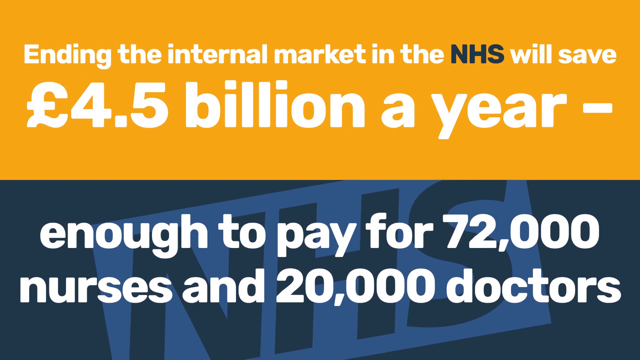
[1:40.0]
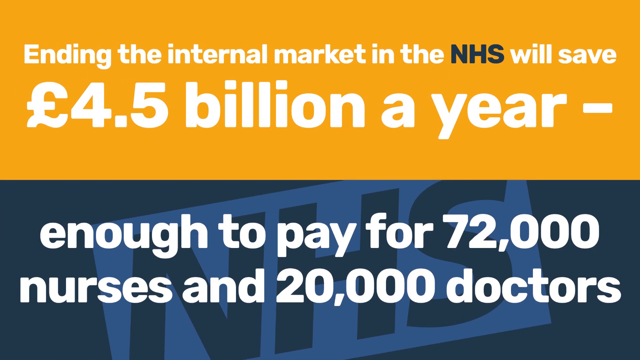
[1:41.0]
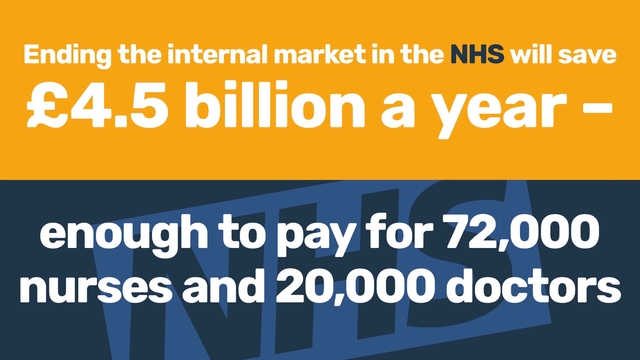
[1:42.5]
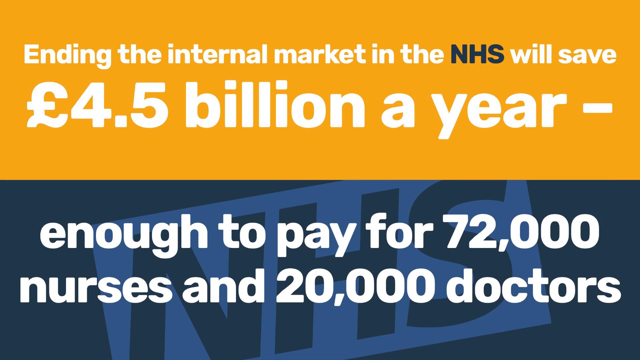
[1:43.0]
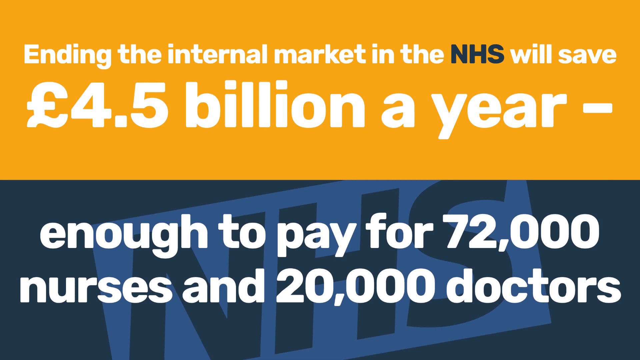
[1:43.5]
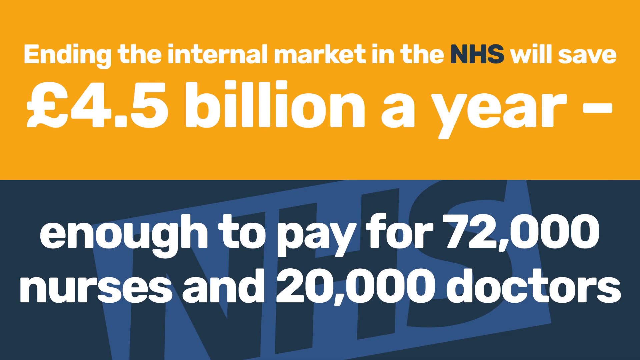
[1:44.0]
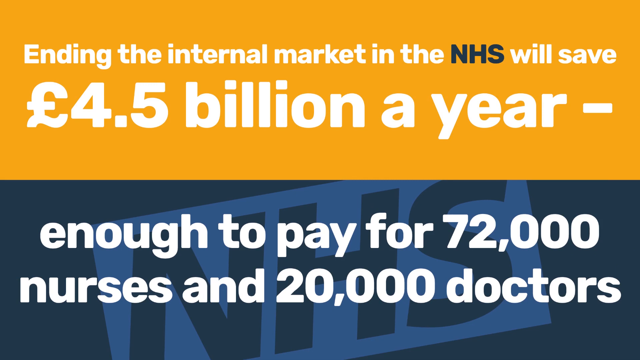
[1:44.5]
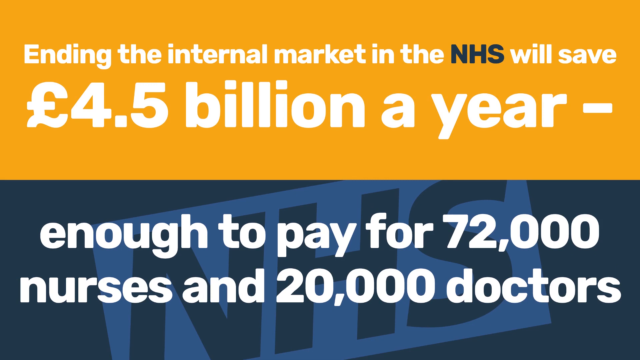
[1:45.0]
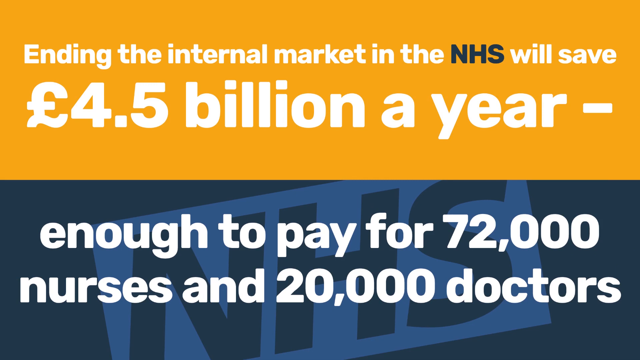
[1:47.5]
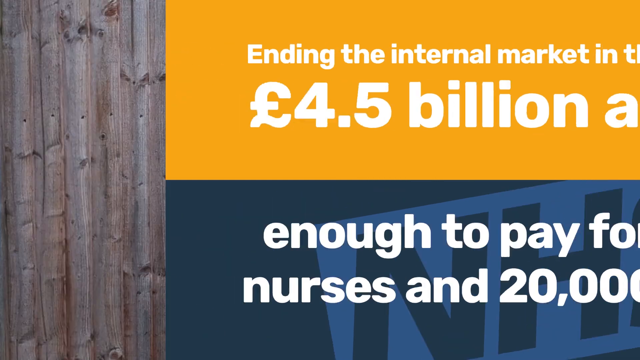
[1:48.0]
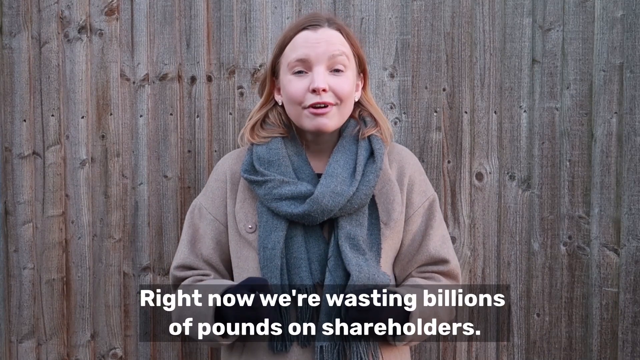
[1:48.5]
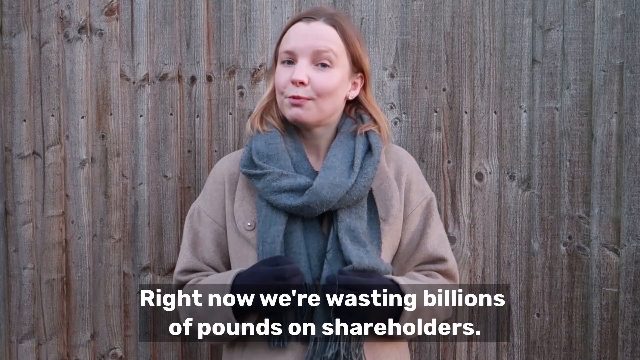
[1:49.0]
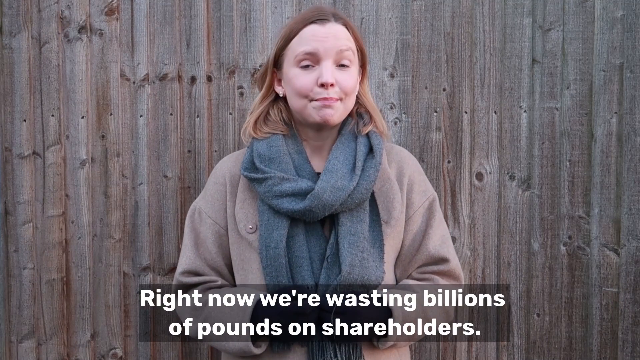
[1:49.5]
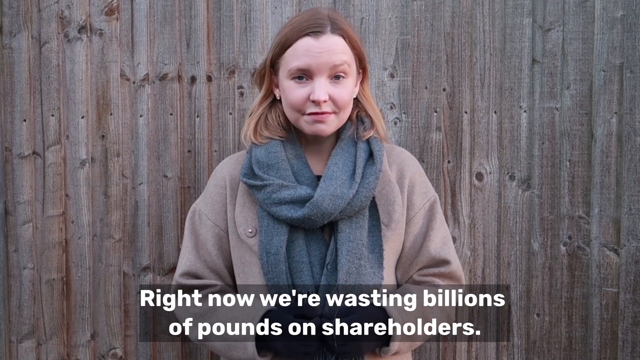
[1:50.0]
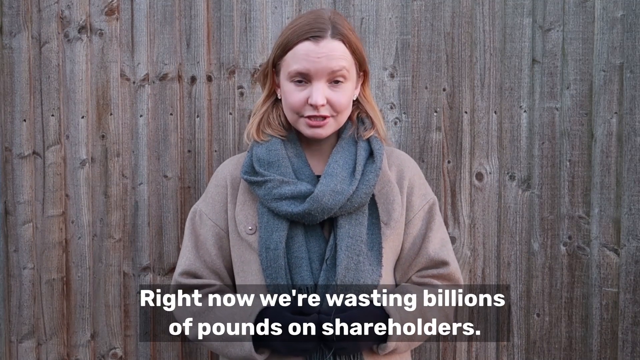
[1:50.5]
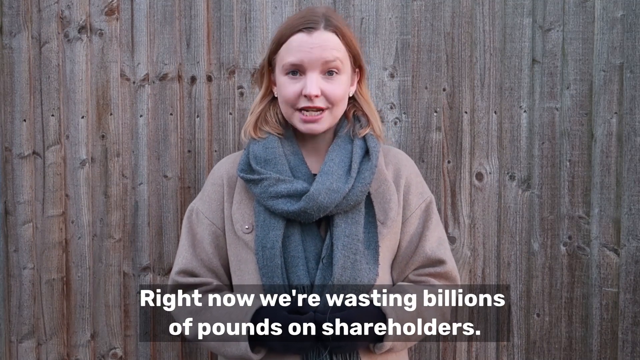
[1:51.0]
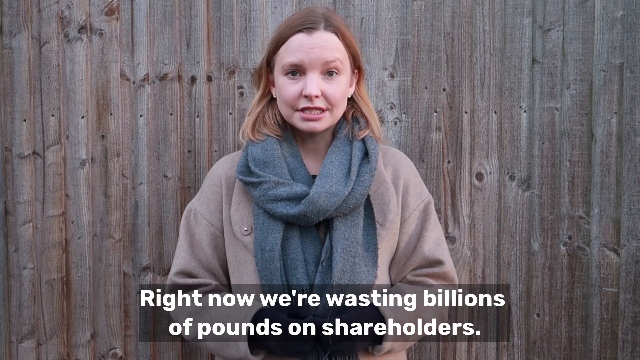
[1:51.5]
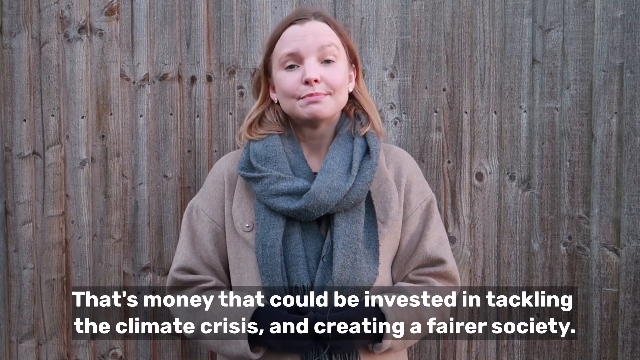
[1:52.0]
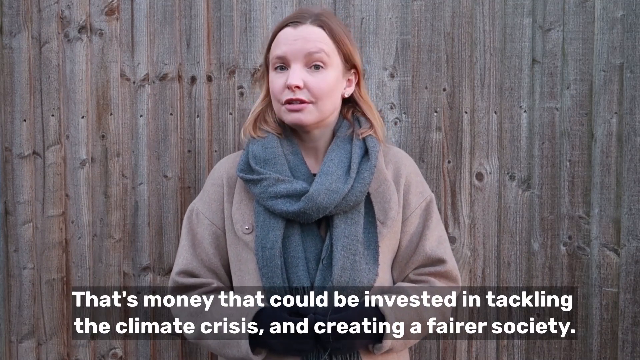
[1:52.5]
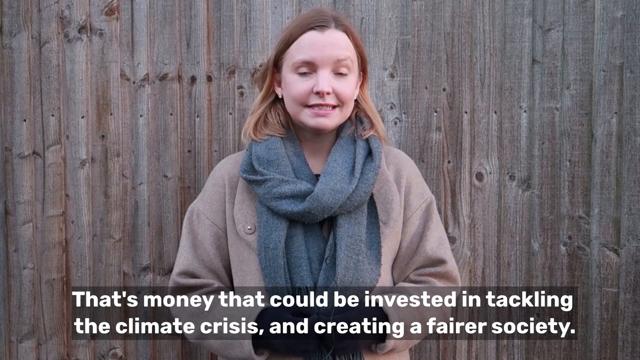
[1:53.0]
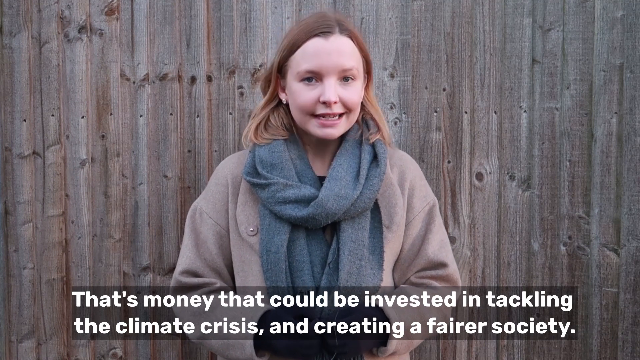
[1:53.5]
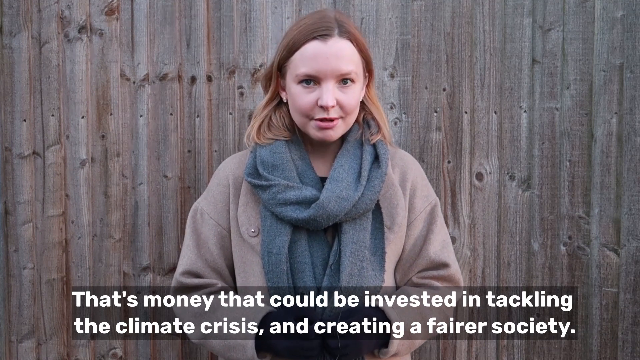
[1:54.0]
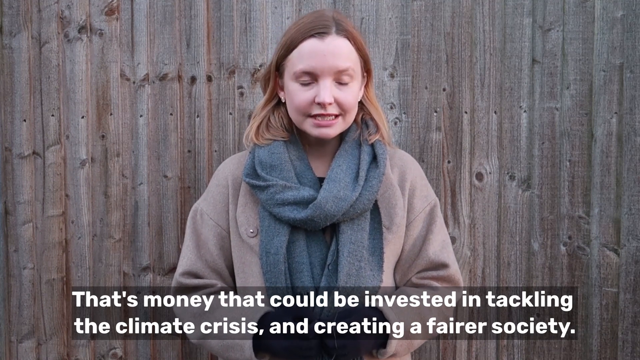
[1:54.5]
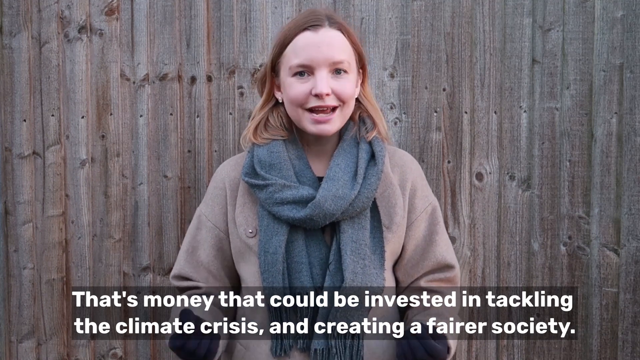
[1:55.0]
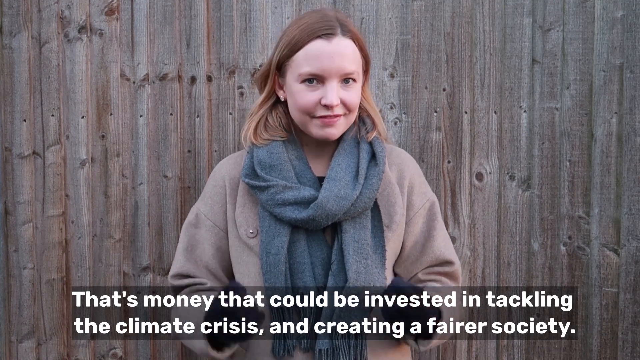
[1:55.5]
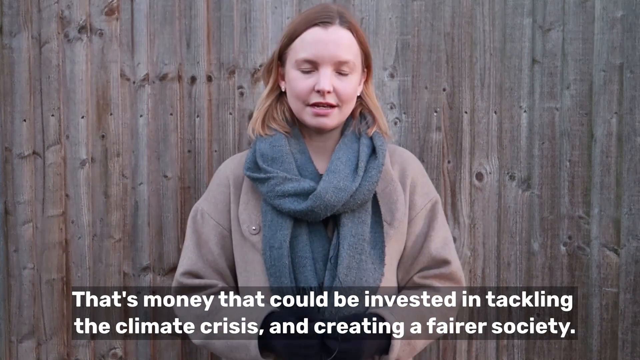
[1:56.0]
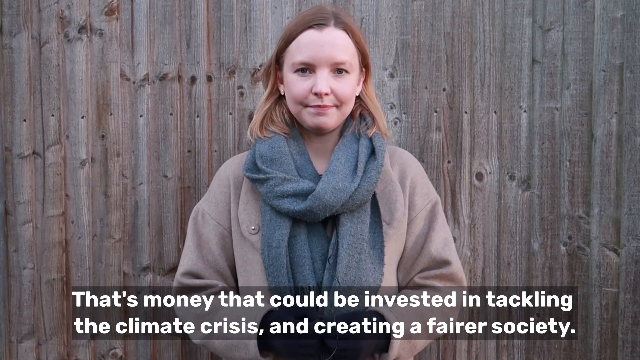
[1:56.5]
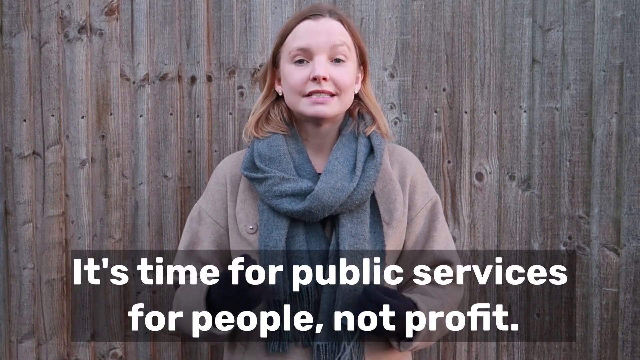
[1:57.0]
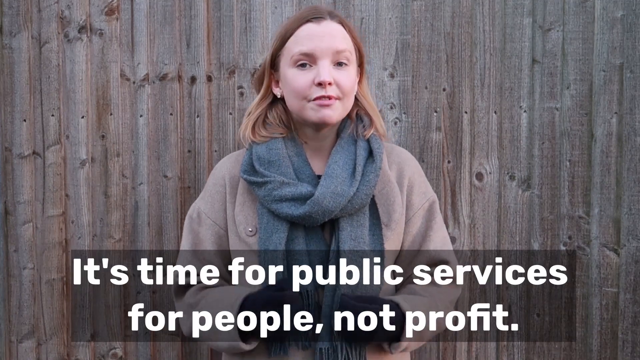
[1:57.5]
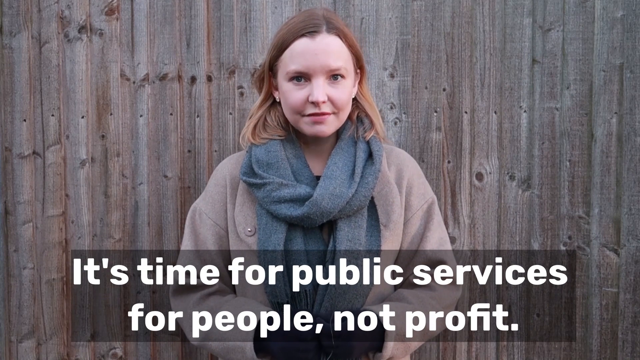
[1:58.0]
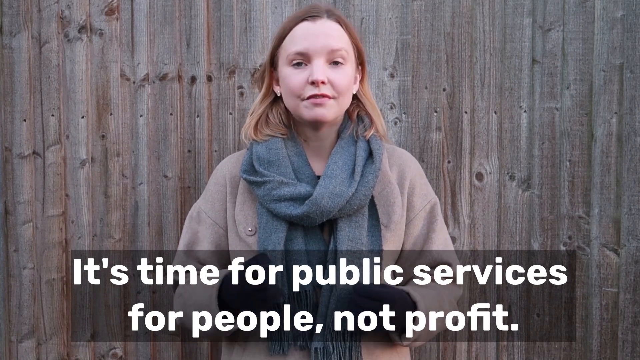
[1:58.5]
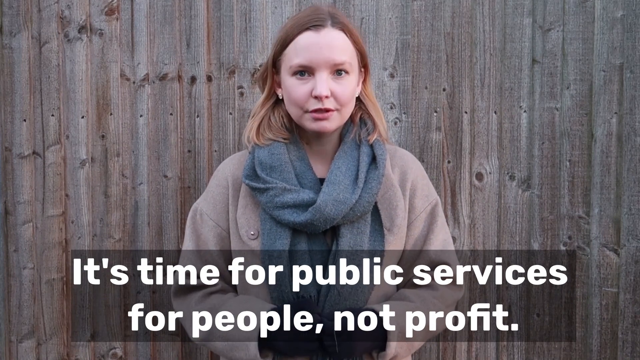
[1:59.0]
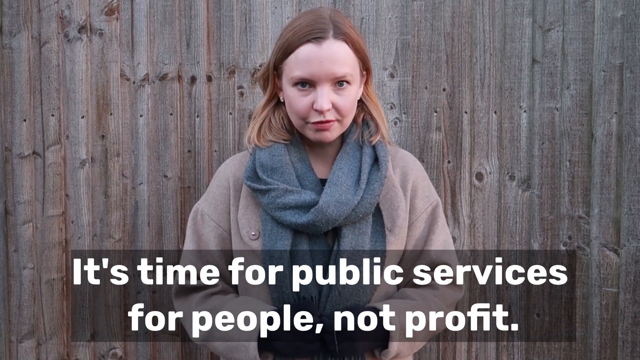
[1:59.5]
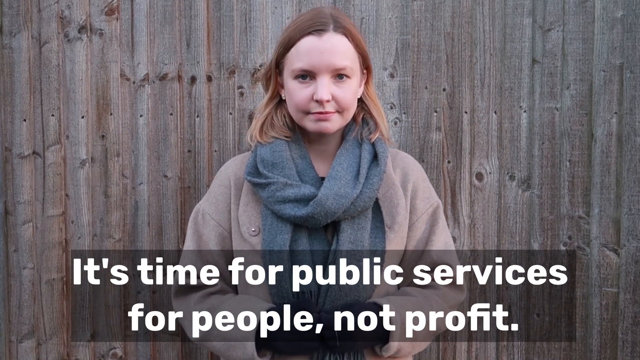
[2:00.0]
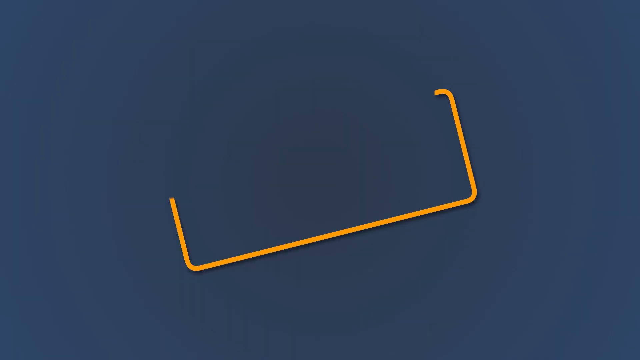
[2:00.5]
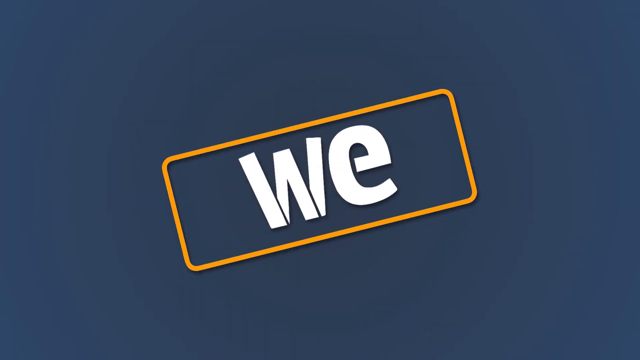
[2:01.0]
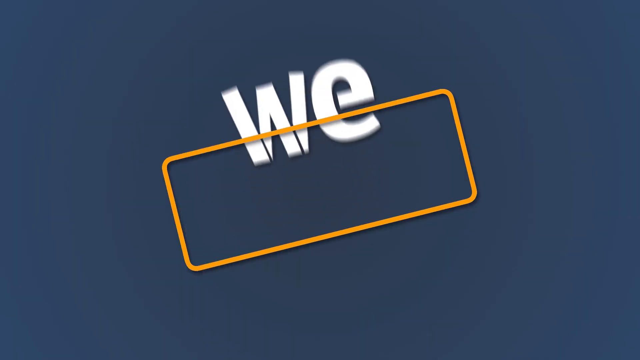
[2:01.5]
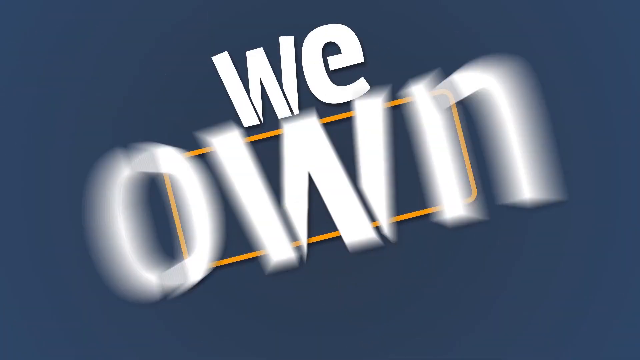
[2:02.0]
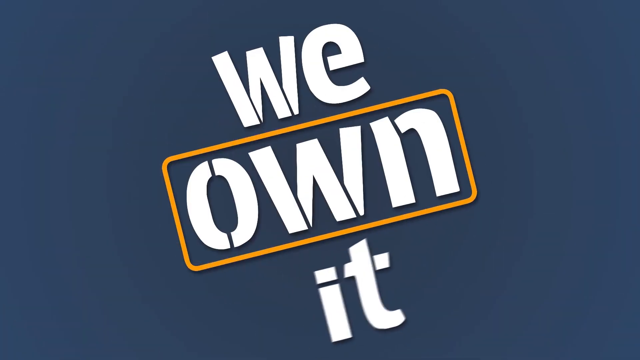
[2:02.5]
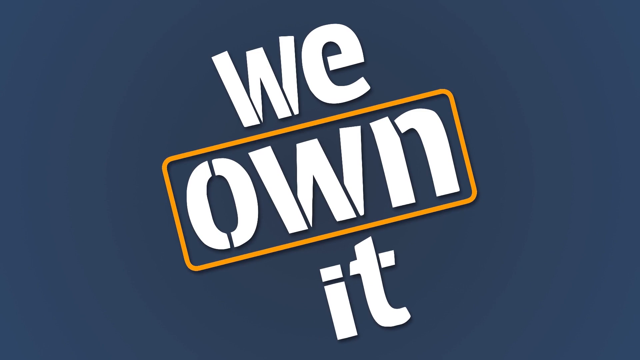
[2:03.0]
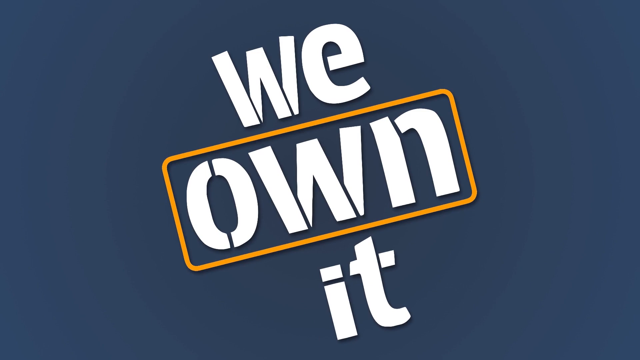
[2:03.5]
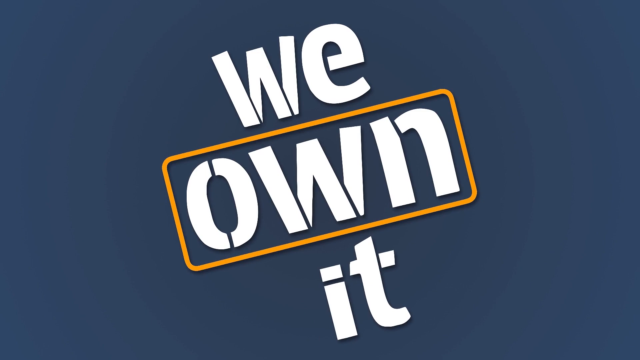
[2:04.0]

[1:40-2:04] The video cuts back to the woman standing against the fence, still wearing her coat and scarf and speaking directly to the camera. At the end, a logo appears on a blue screen, apparently stenciled on. The letters say "we own it", with "own" in a yellow square, apparently indicating some sort of business or non-profit.